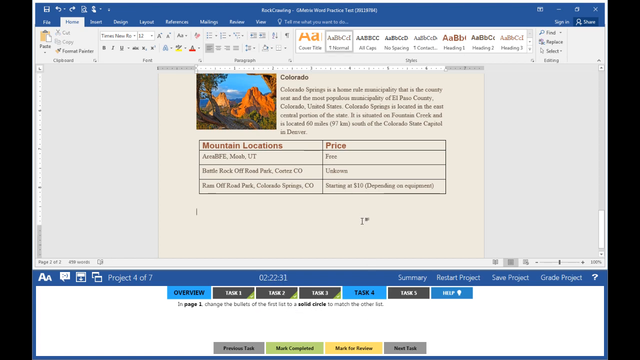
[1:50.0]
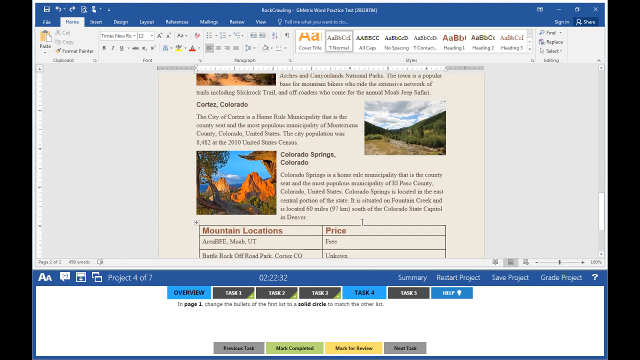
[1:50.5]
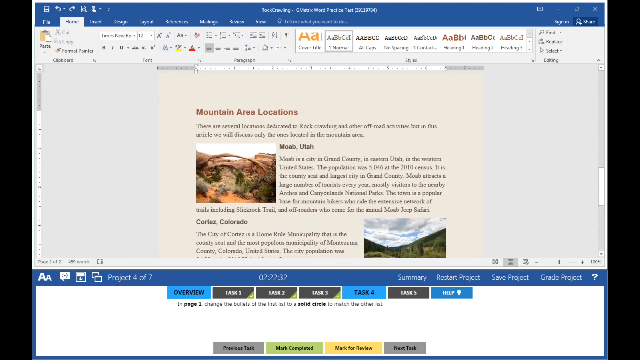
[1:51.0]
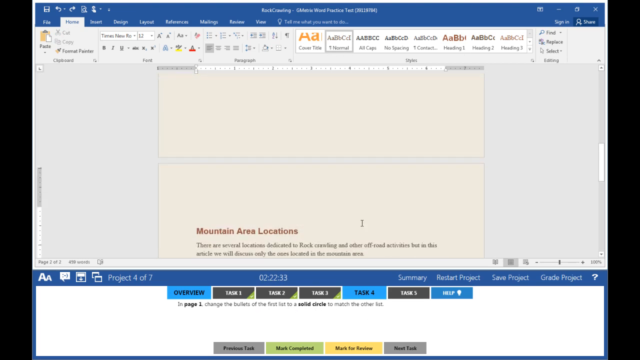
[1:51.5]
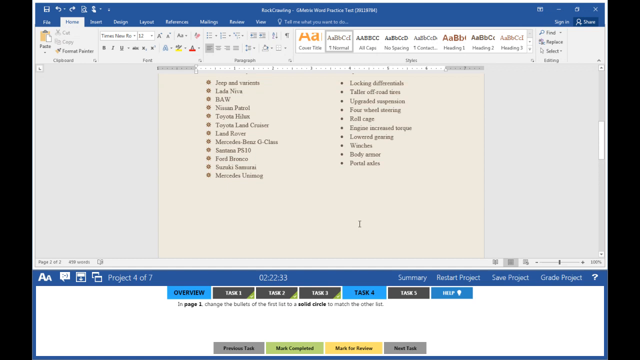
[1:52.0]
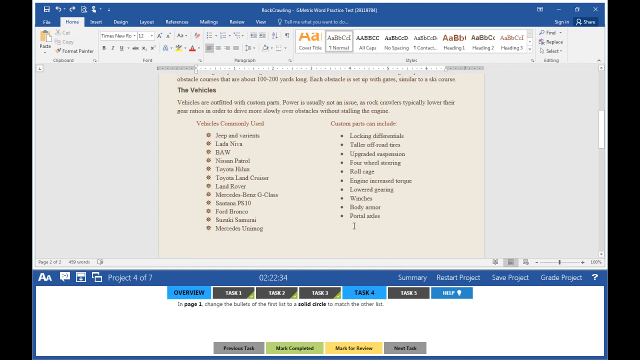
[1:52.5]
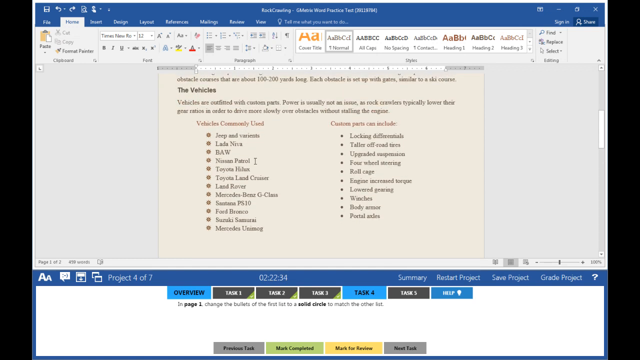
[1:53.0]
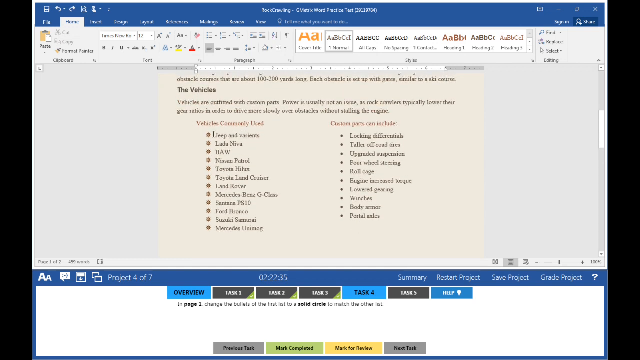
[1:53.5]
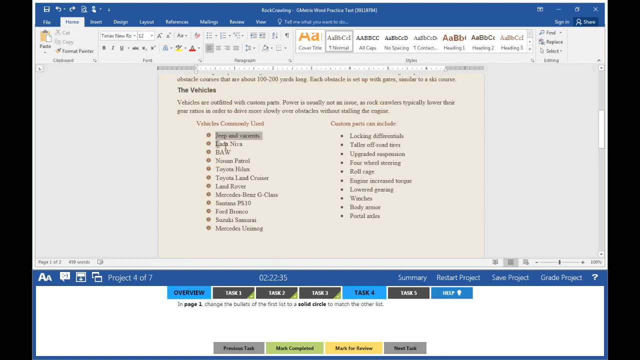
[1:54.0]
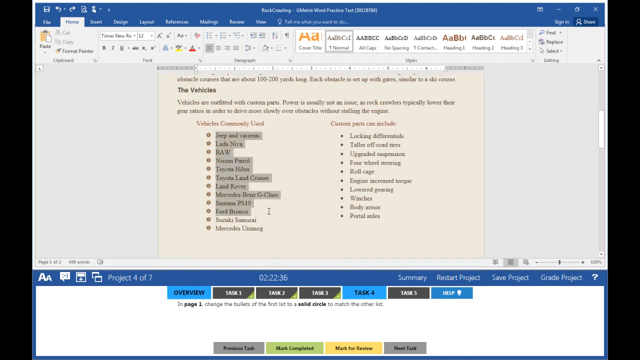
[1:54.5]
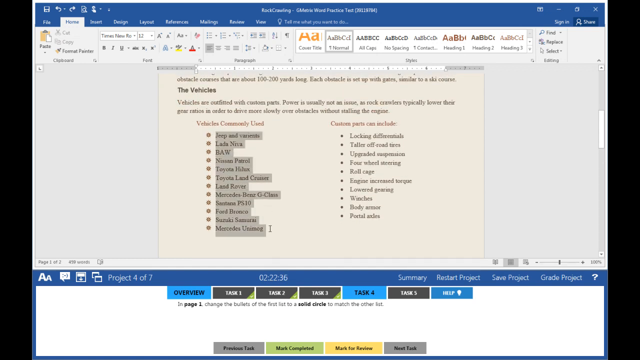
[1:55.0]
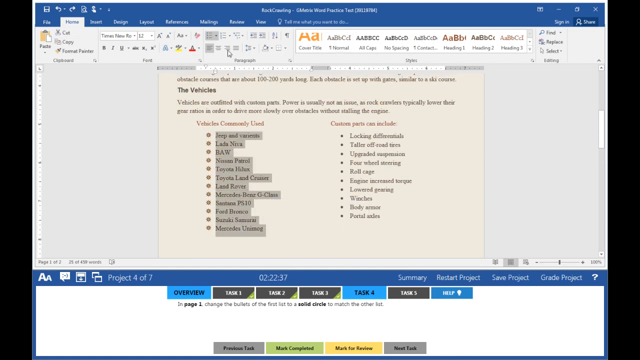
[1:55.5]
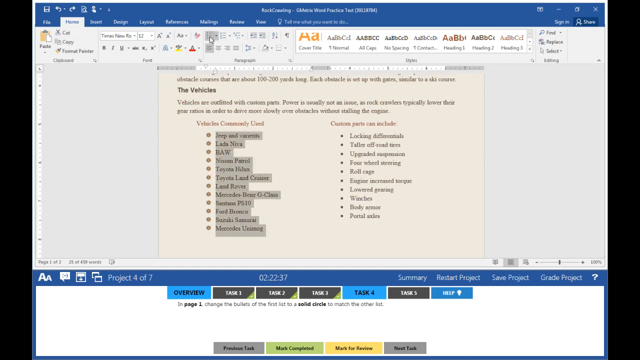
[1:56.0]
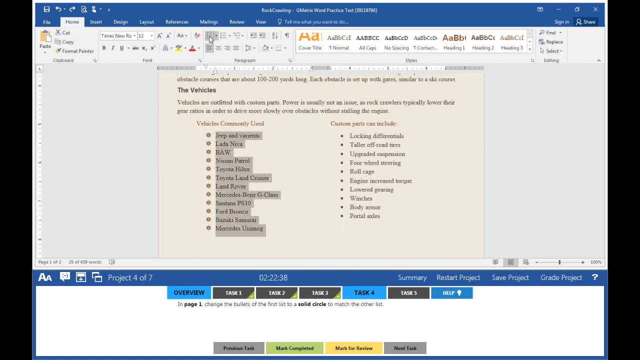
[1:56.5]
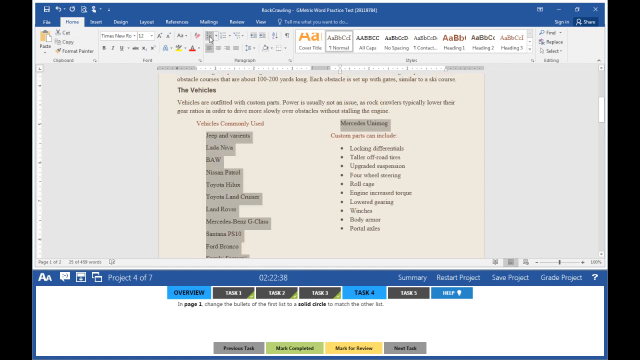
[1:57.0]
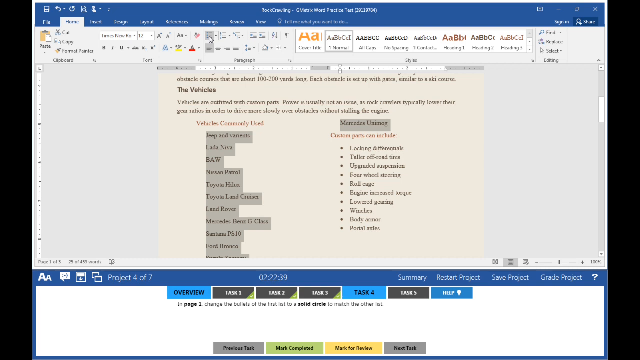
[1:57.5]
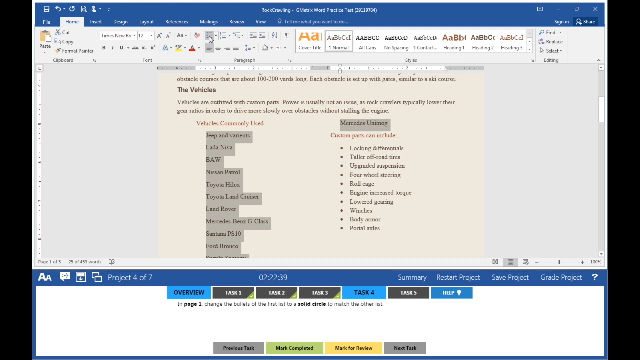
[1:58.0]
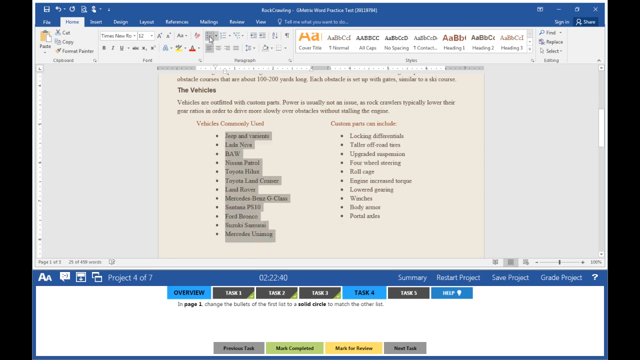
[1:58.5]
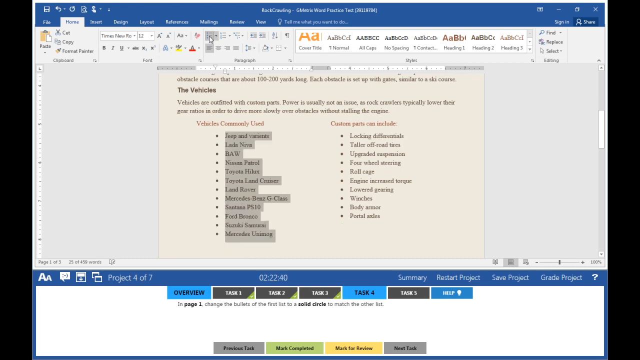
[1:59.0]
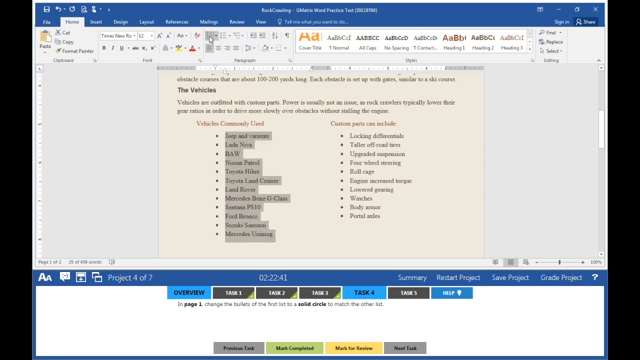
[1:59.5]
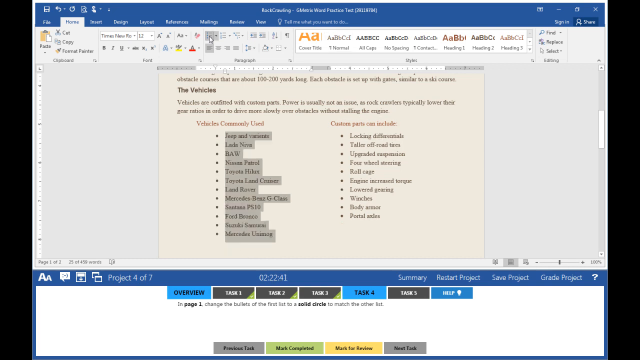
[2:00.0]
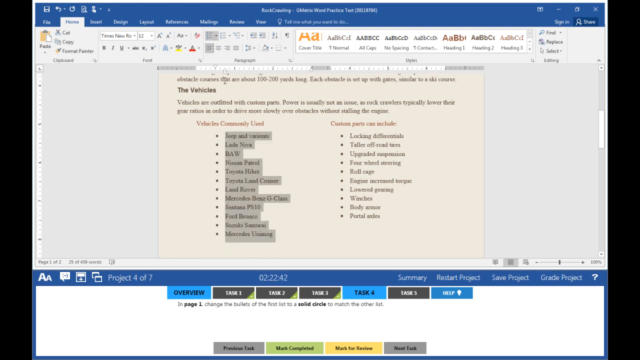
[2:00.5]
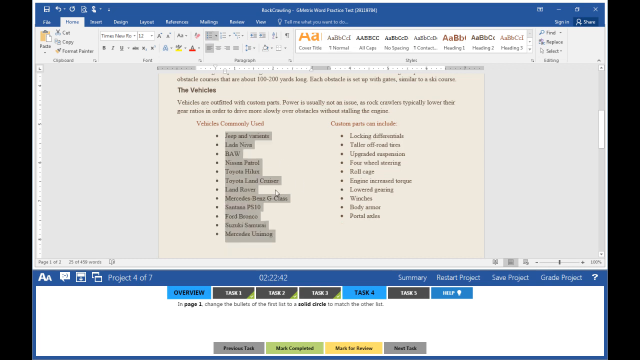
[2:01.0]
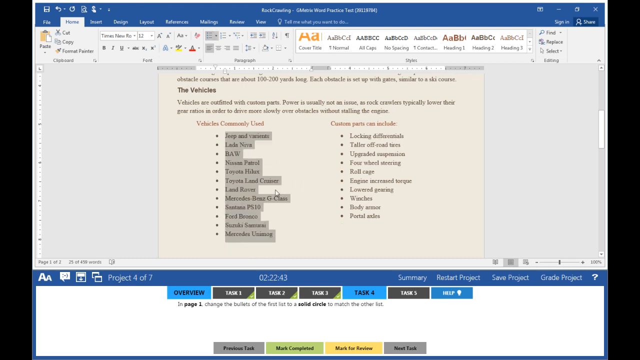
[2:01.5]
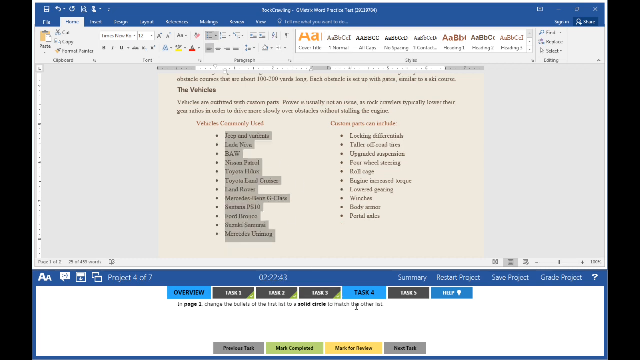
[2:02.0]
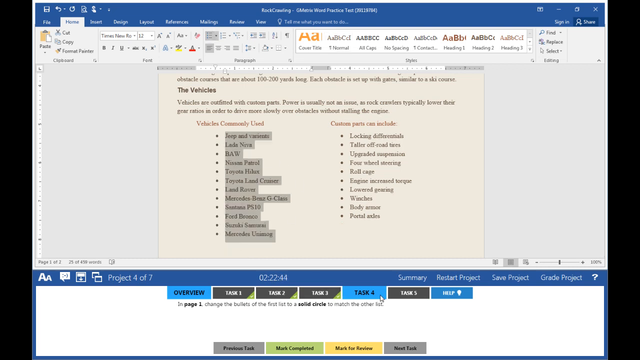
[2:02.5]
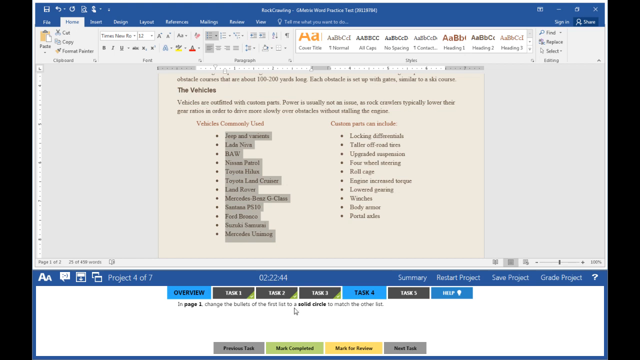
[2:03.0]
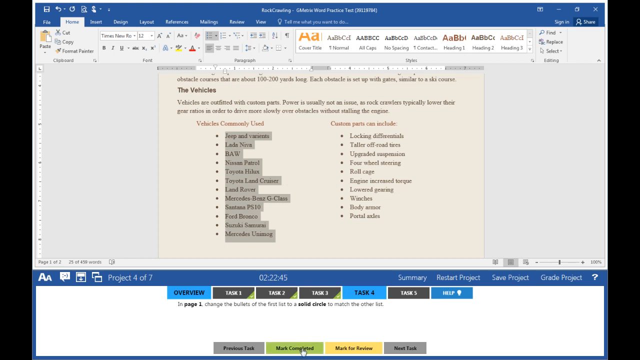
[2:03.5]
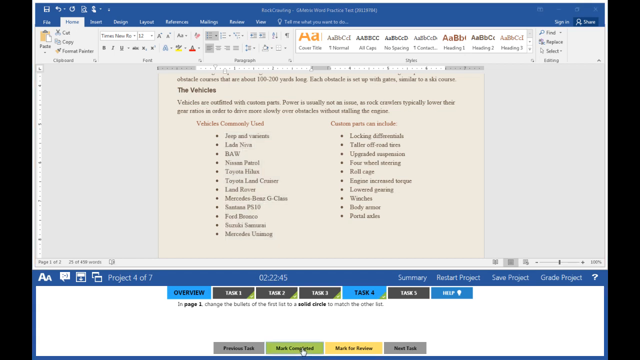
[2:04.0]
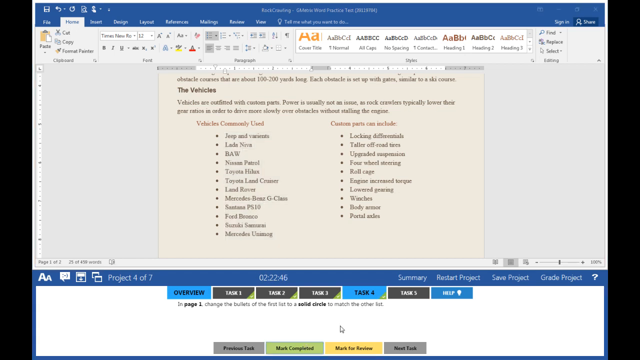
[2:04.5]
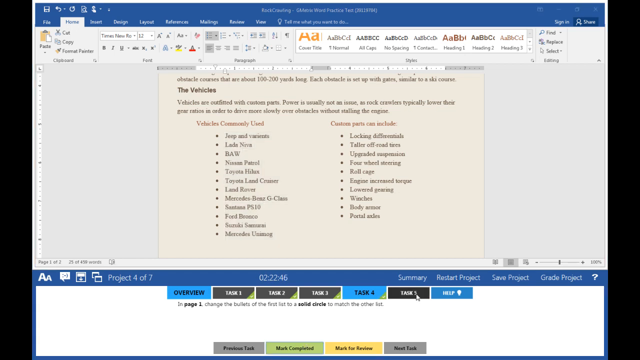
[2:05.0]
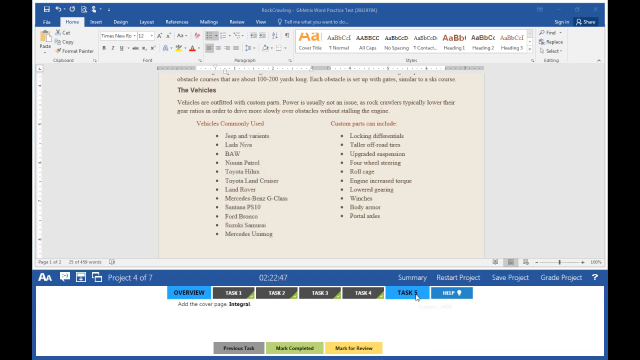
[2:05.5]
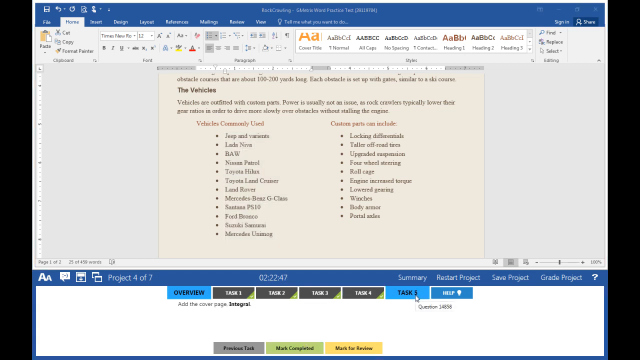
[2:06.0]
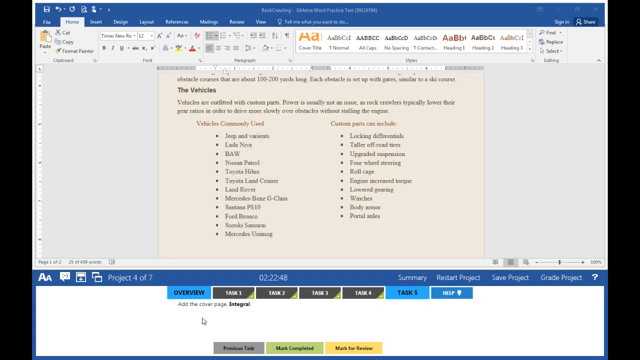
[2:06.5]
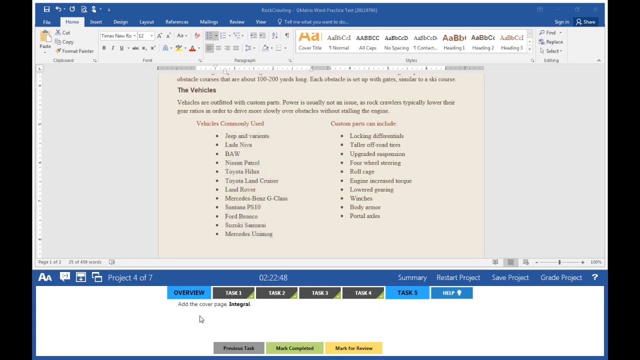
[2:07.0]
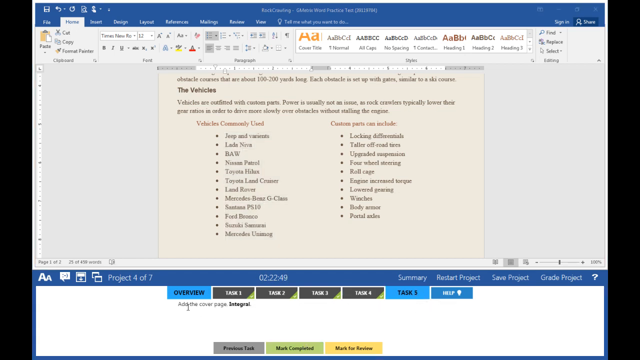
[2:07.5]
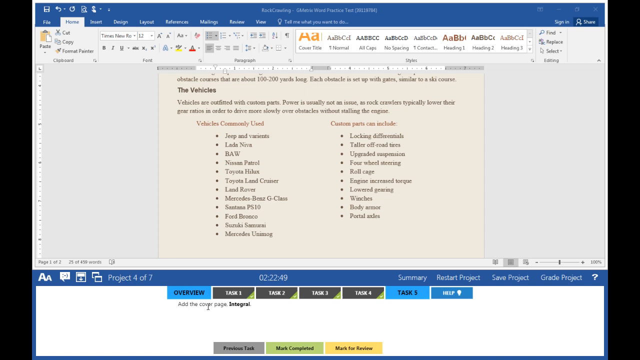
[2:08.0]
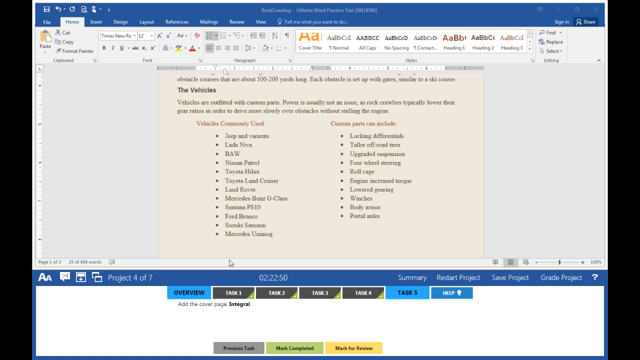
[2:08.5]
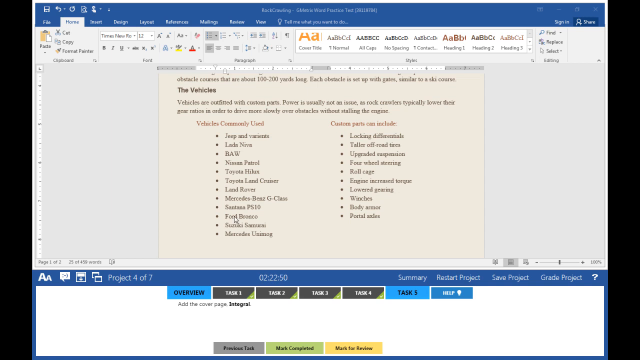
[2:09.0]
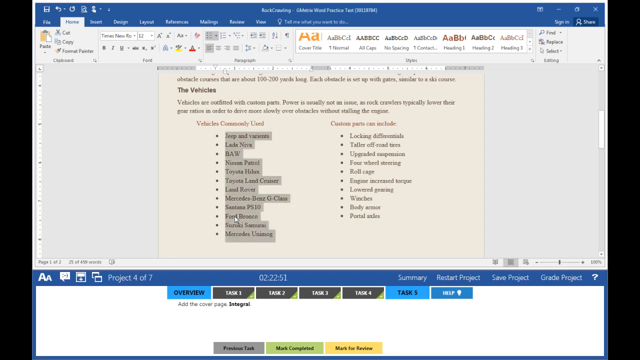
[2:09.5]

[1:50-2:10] A person modifies a Microsoft Word document with tasks at the bottom. After three tasks, they click on task four, which says "in page one, change the bullets of the first list to a solid circle to match the other list." They scroll up and click on the list of vehicles commonly used for rock crawling, then go back down and the task is completed. They move to task five, "add the cover page integral," and highlight the steps. The Word document has a blue banner at the top. The second page with the tasks, which they apparently have open at the same time, says "project four of seven" throughout.